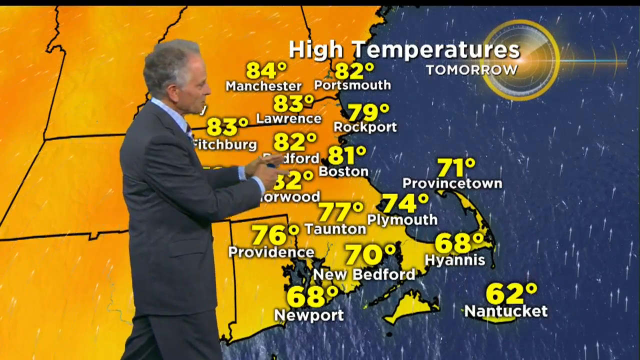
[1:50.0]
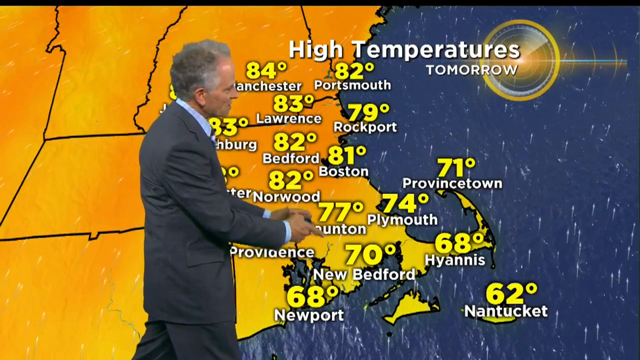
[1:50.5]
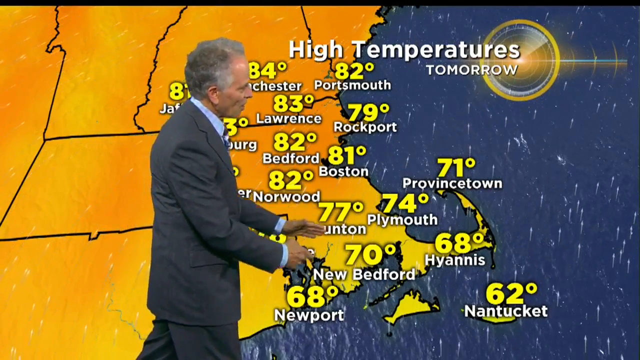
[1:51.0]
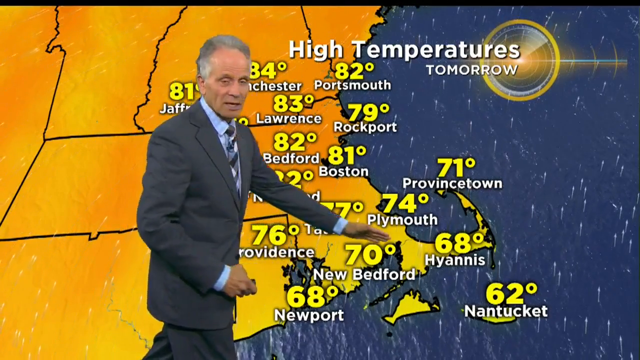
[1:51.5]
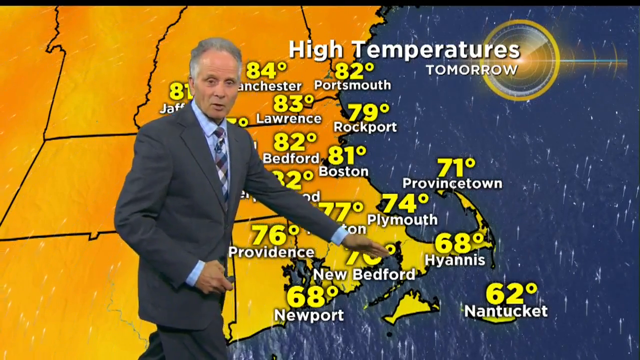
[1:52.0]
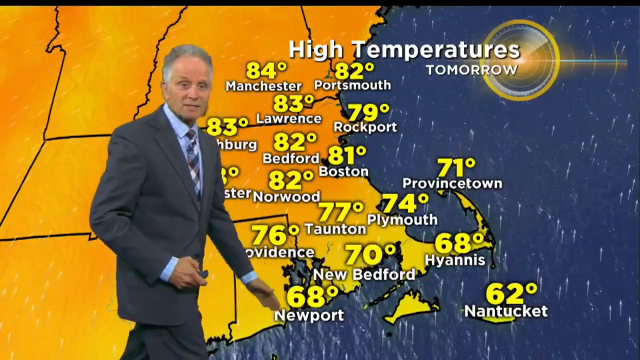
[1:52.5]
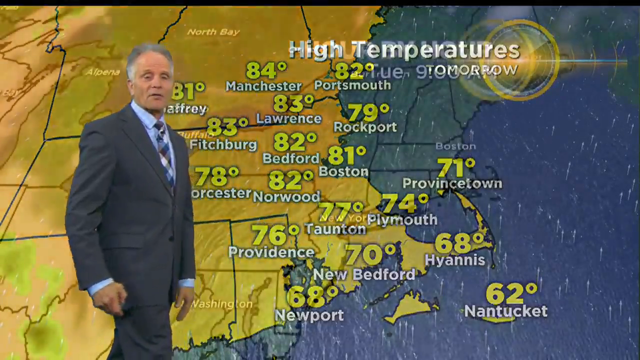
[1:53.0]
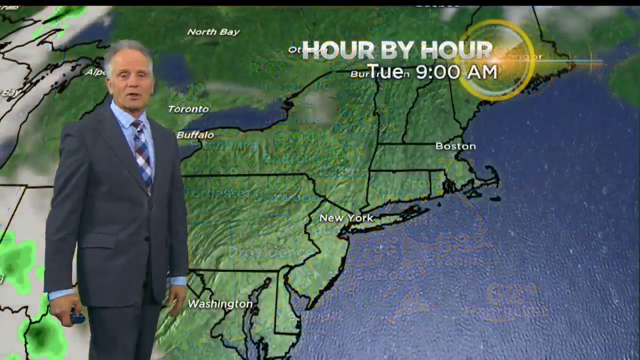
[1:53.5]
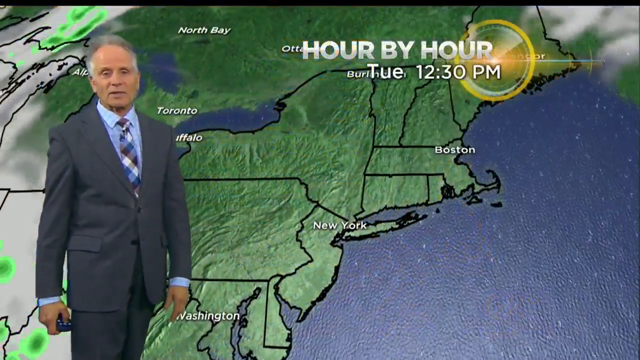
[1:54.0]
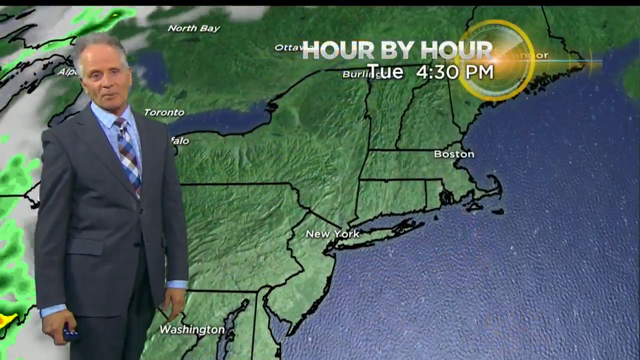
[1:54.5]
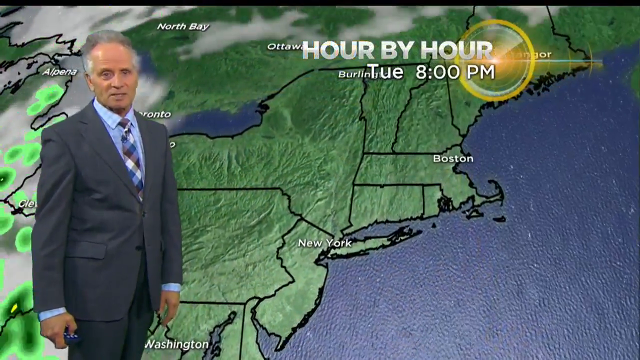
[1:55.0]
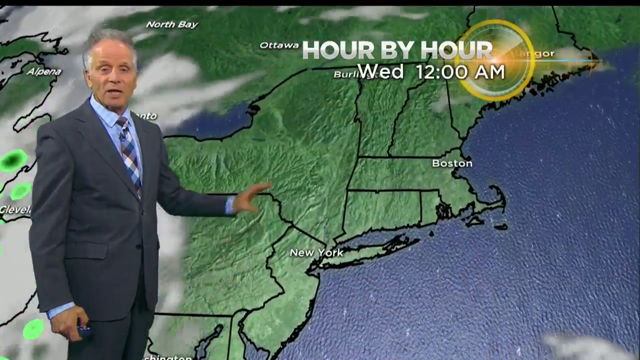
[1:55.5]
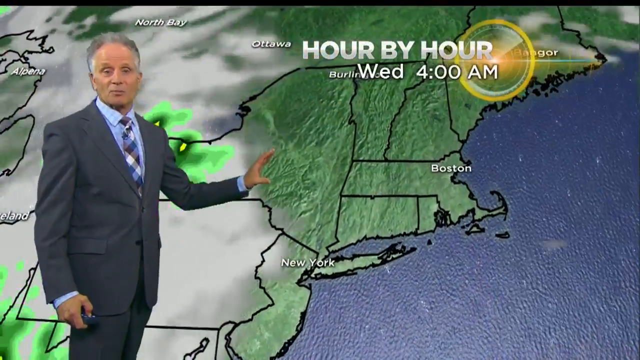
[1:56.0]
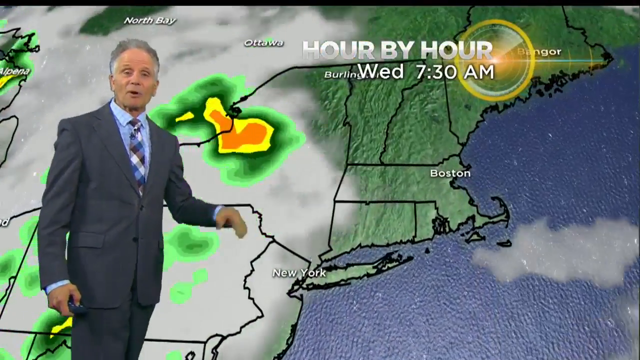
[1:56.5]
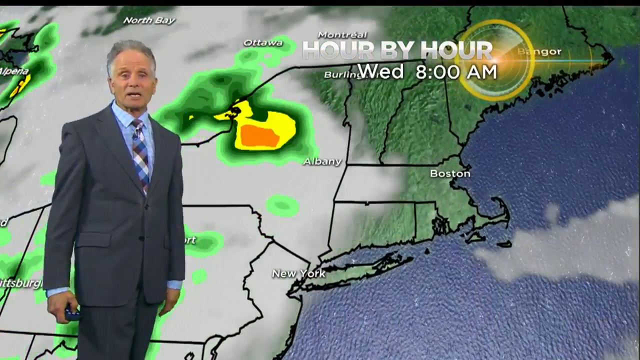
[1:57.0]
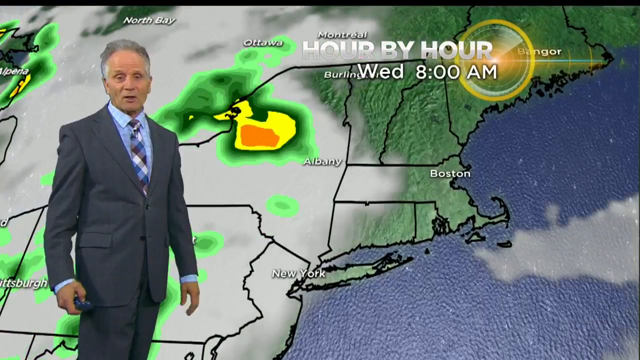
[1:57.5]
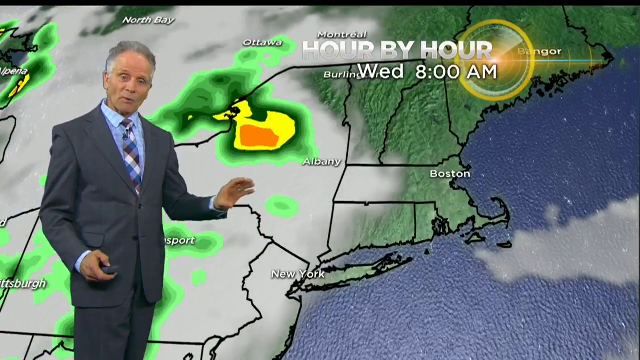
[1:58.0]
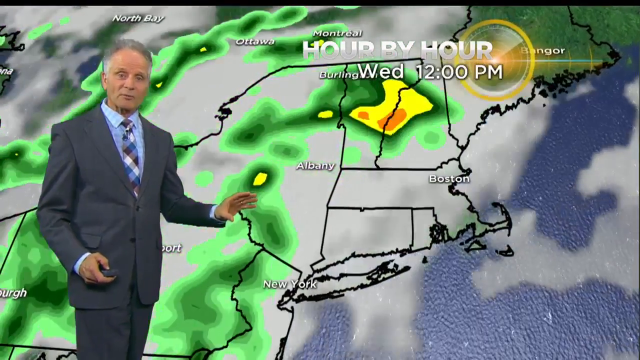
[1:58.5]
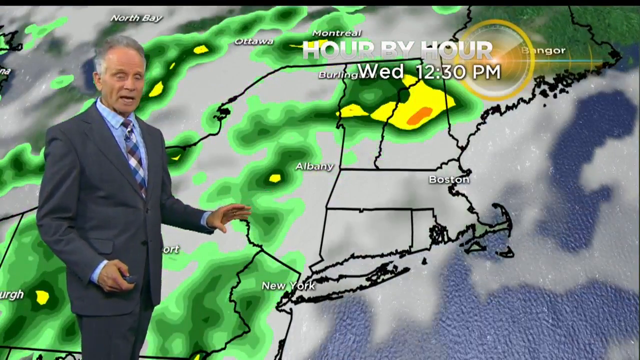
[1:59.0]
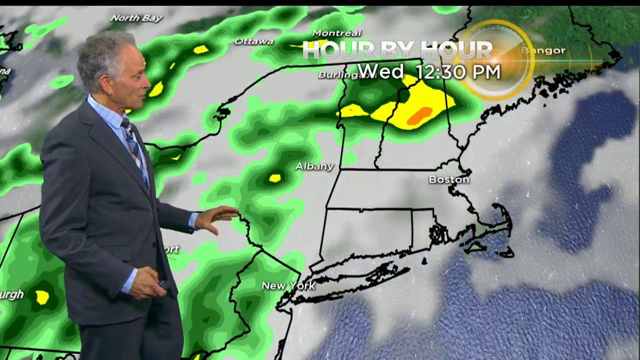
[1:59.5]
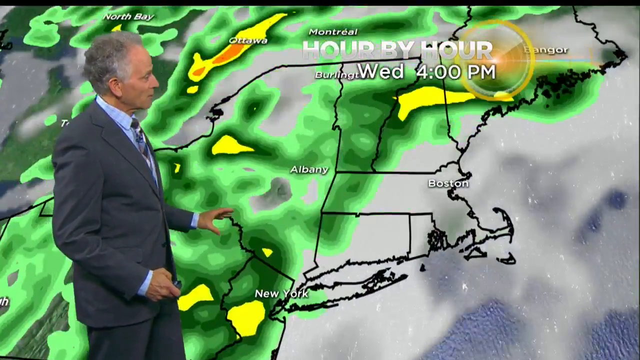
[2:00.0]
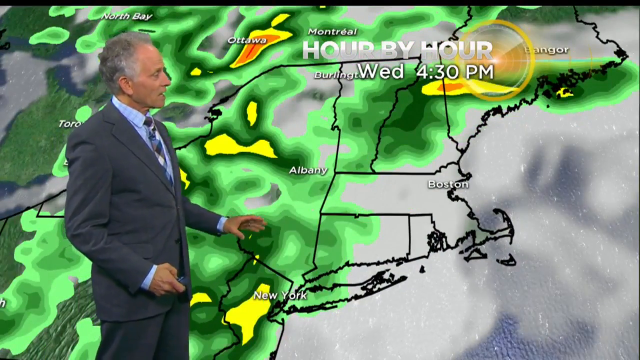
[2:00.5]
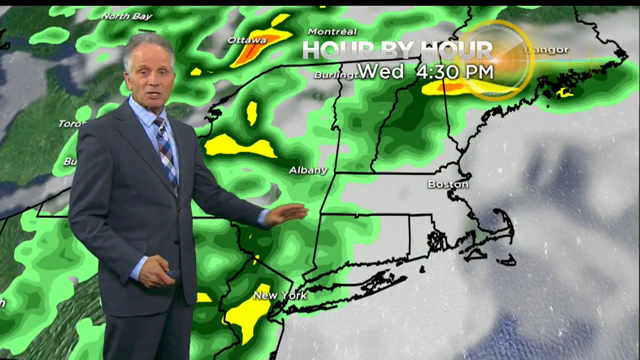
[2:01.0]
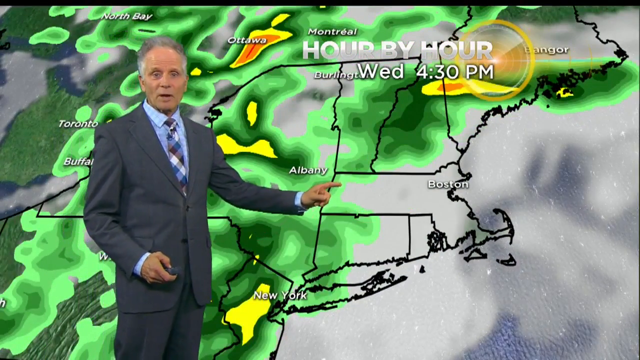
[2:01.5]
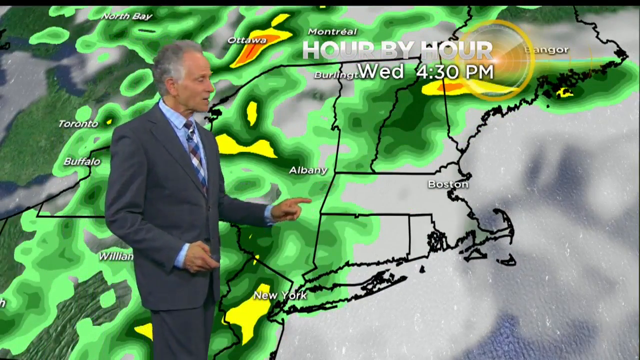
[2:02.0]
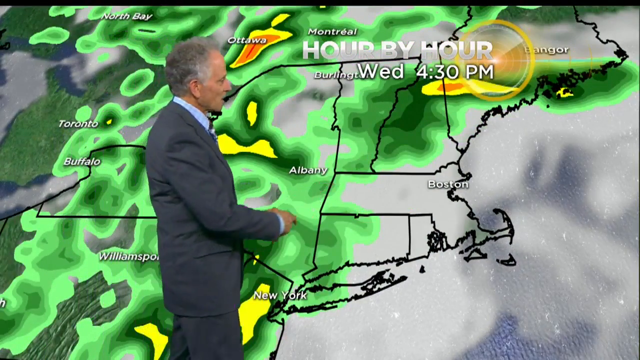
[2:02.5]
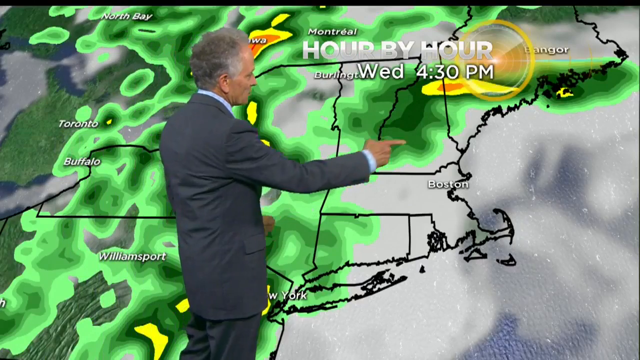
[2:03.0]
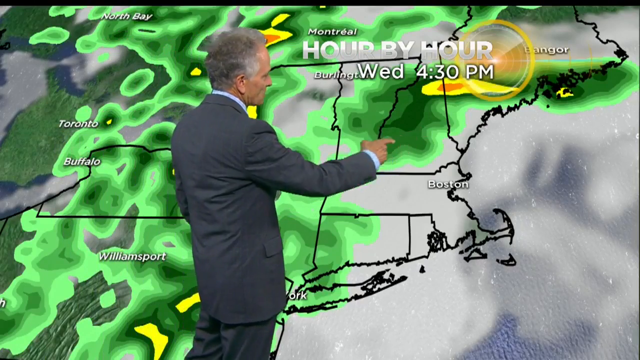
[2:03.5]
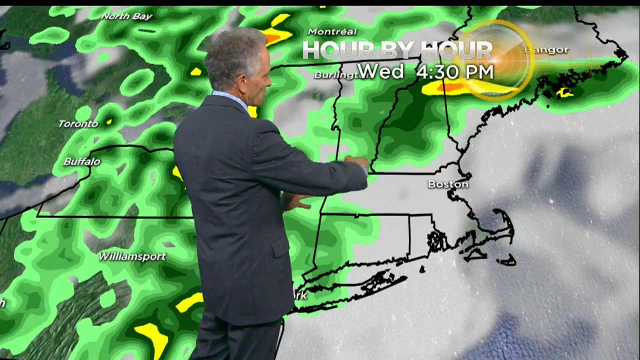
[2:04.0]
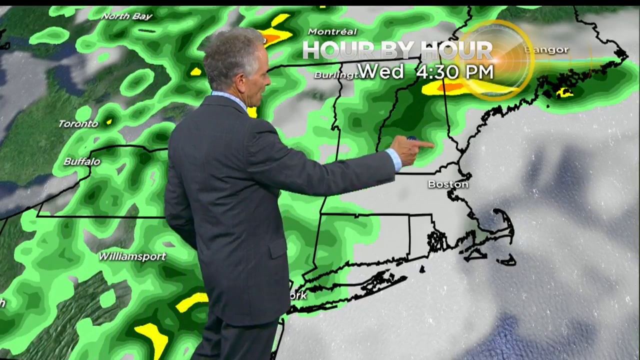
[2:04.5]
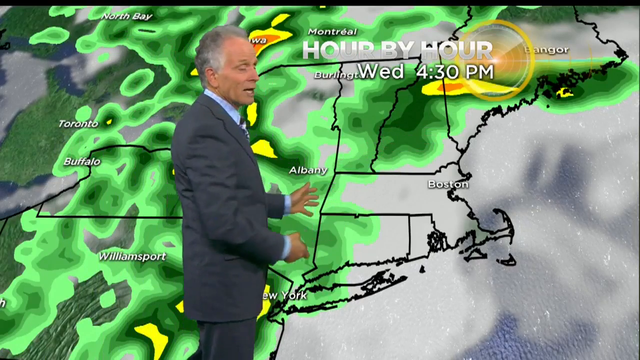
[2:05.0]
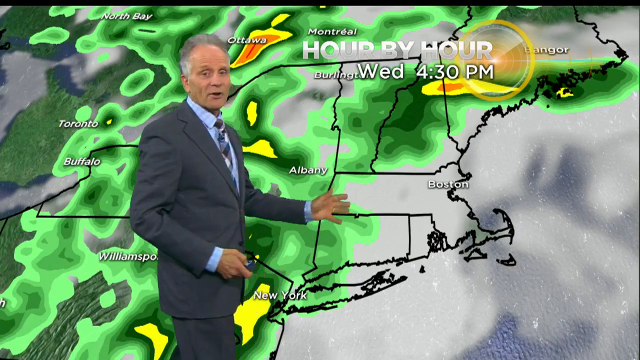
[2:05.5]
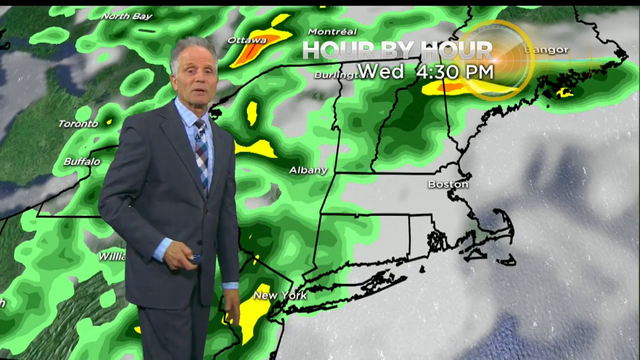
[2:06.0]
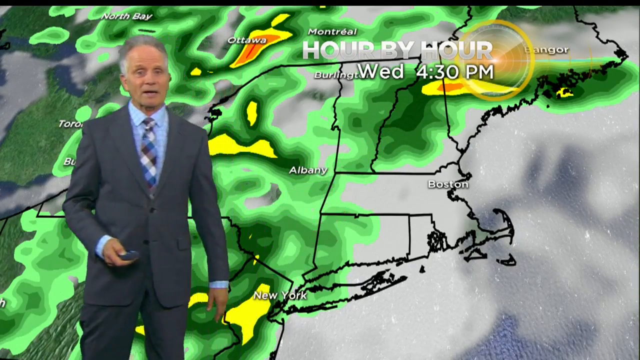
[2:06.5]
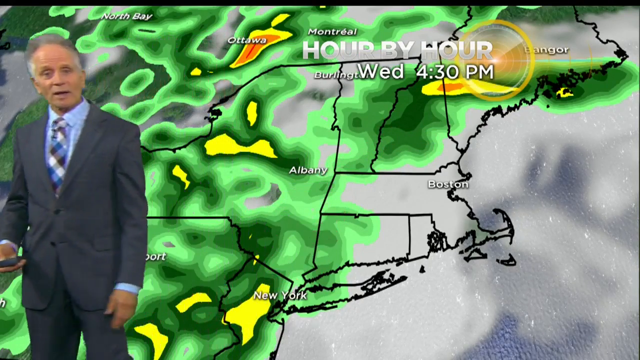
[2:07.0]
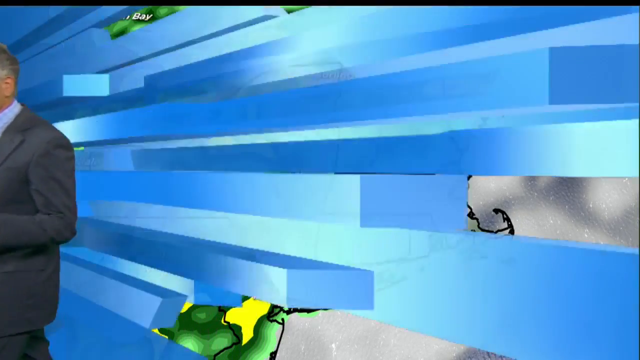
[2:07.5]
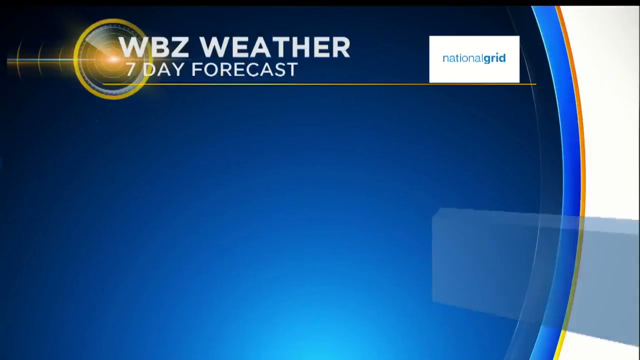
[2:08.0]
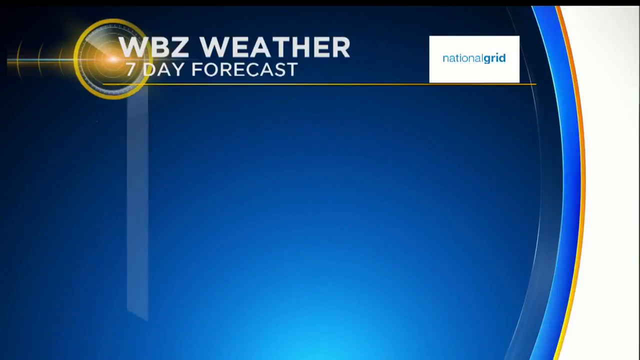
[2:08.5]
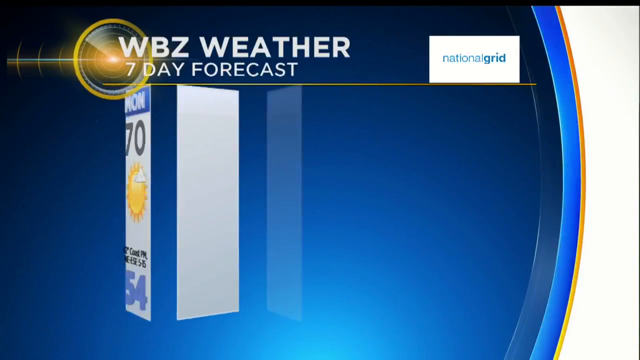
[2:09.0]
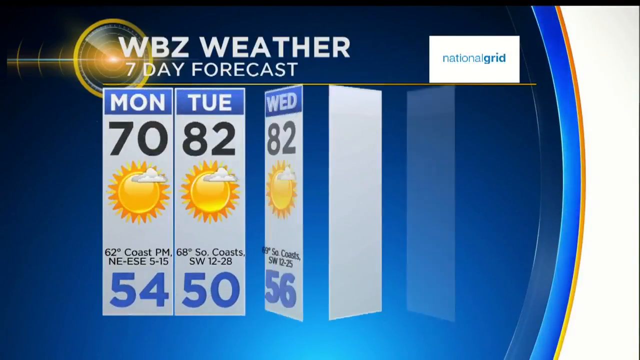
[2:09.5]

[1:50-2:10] The screen with the orange-yellow states of the upper east continues as the meteorologist talks about tomorrow's high temperatures in the Boston area. To the right are what look like deep waters, and an orange-y disc is behind the text "high temperatures tomorrow". He points, and then a new screen shows the states in a greenish color, reading "hour by hour Tuesday 3:30 p.m.", with cloud coverage and rain clouds coming in from the left. He keeps talking and pointing at different places with his hands, then walks away. A weather forecast appears, sort of turning from day to day: the "WBZ weather seven-day forecast", showing Monday through Friday with different temperatures.